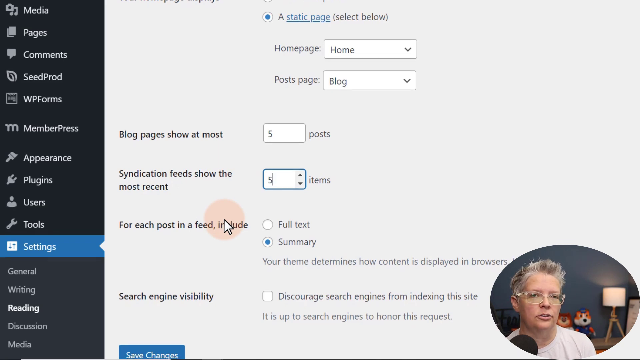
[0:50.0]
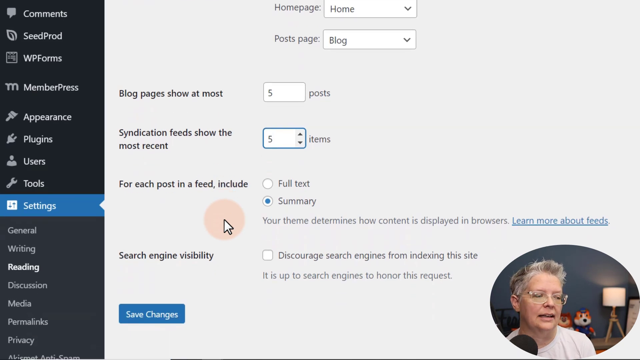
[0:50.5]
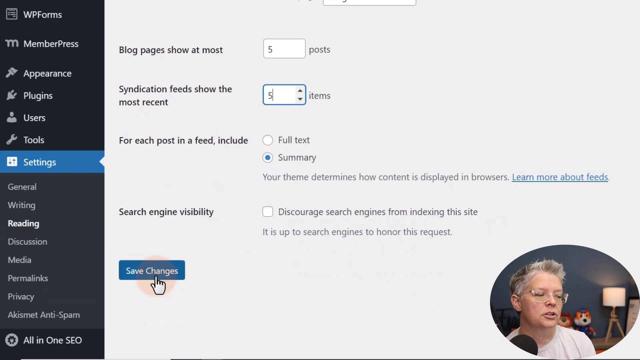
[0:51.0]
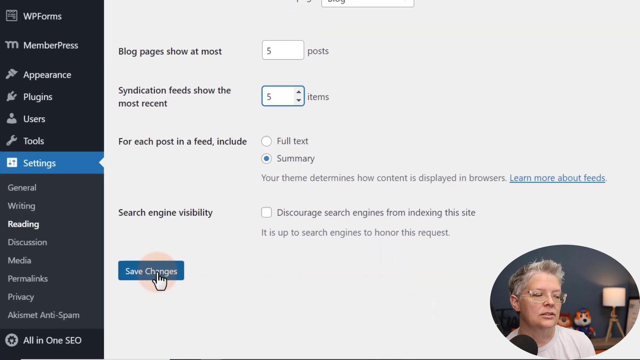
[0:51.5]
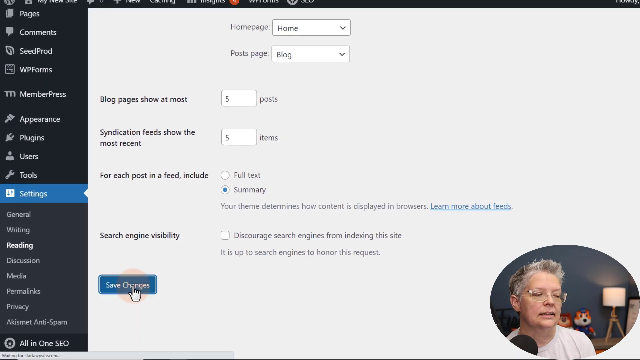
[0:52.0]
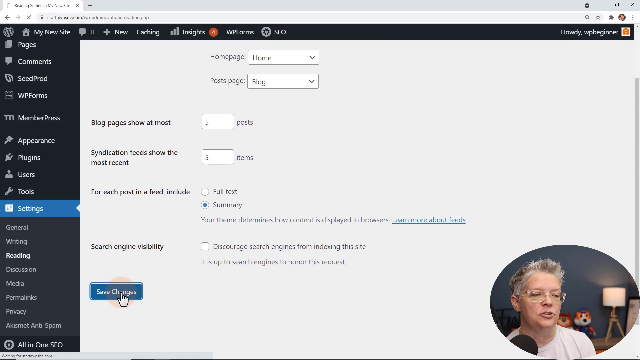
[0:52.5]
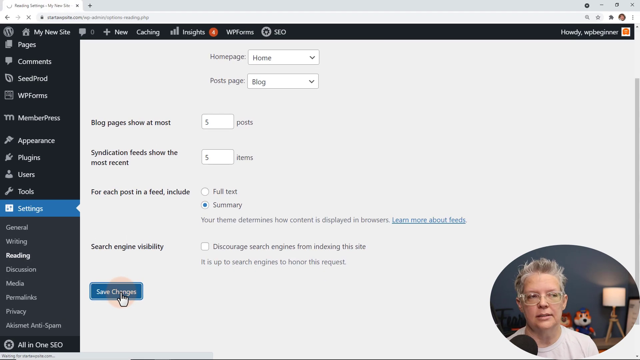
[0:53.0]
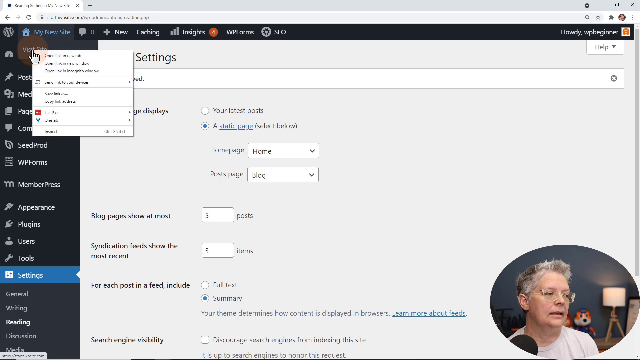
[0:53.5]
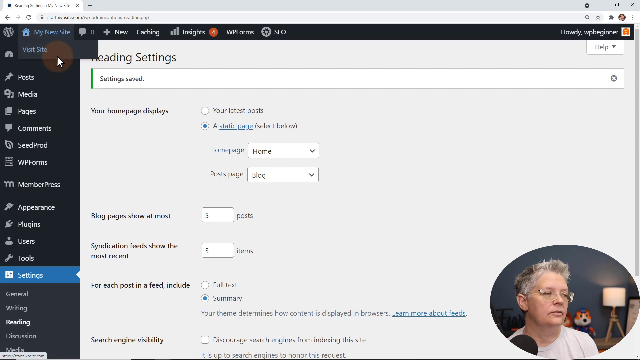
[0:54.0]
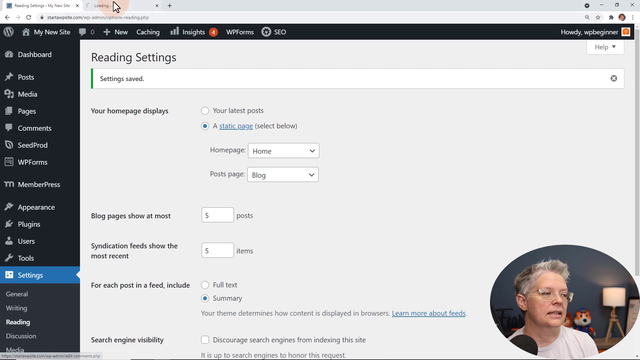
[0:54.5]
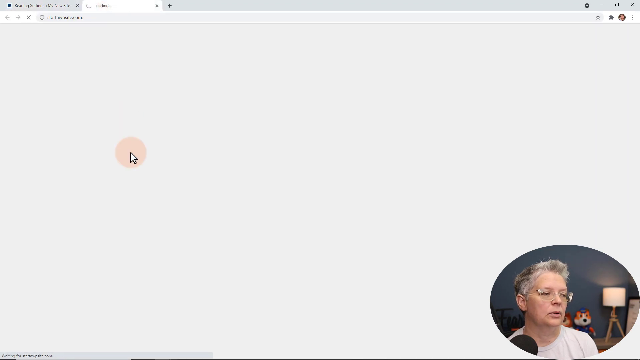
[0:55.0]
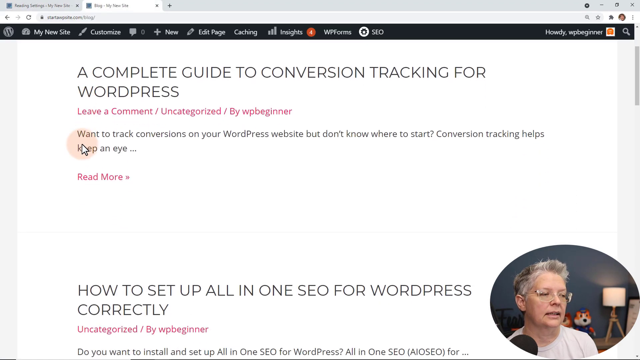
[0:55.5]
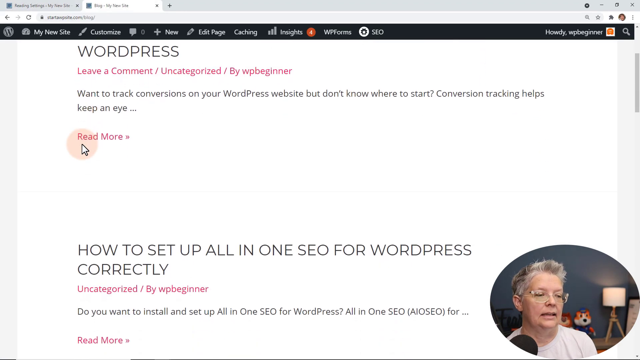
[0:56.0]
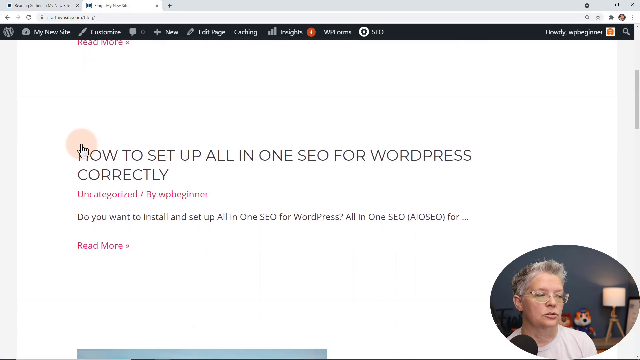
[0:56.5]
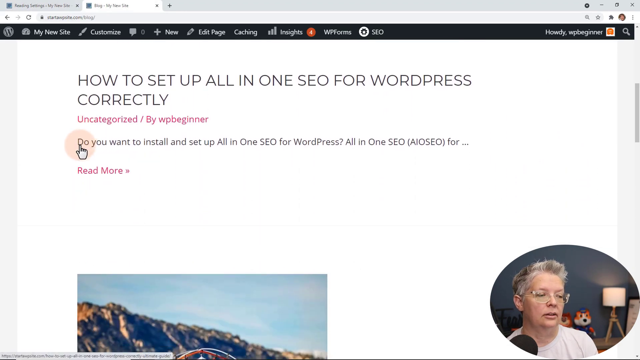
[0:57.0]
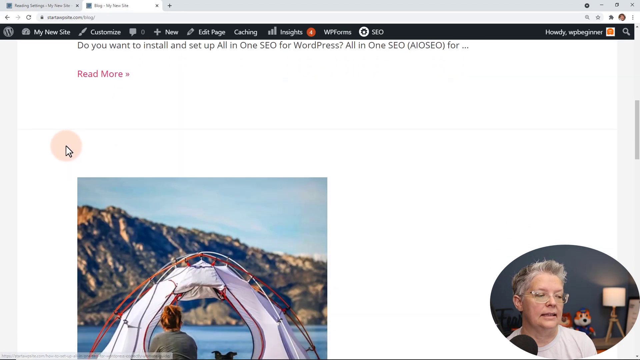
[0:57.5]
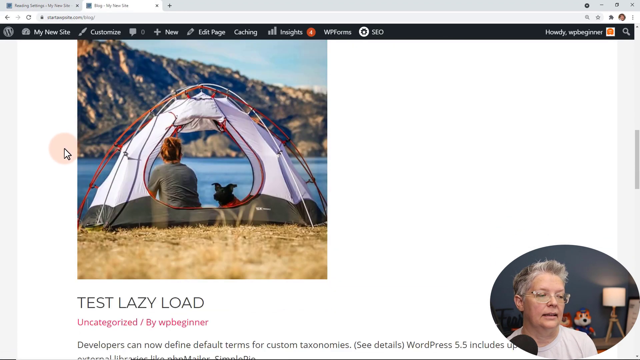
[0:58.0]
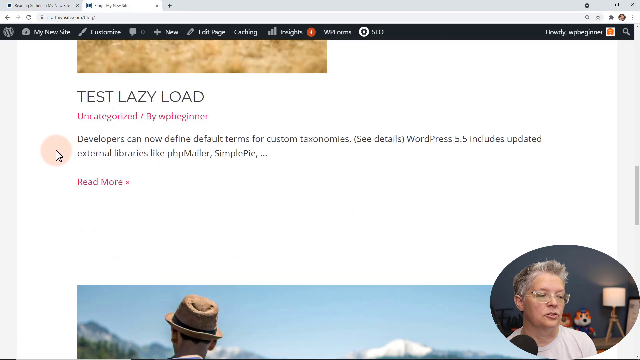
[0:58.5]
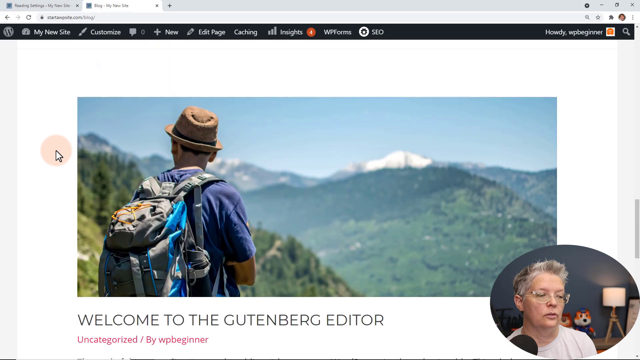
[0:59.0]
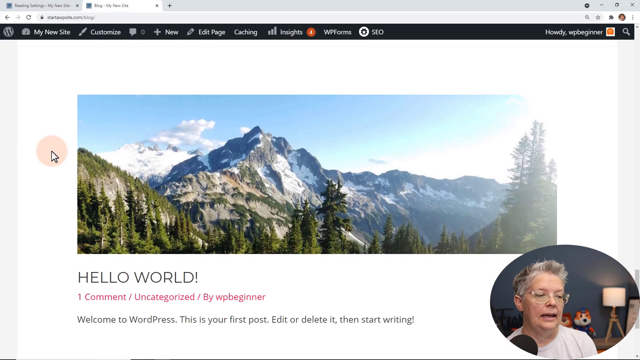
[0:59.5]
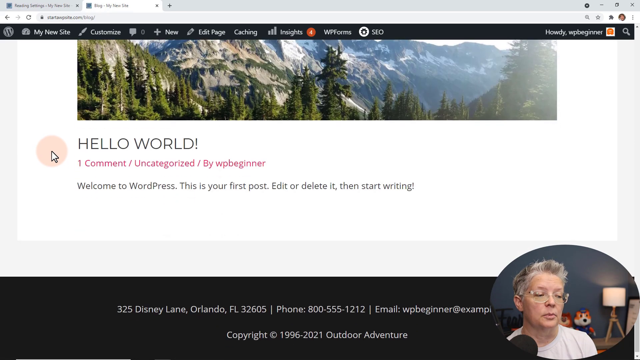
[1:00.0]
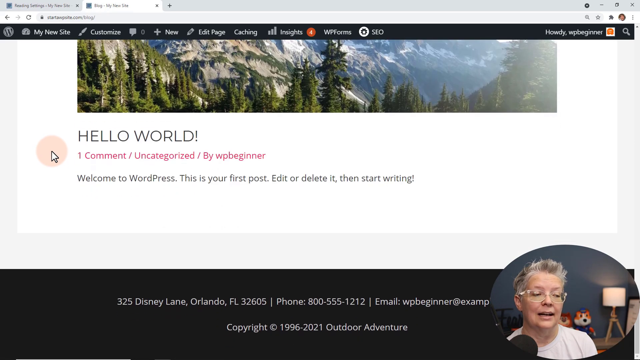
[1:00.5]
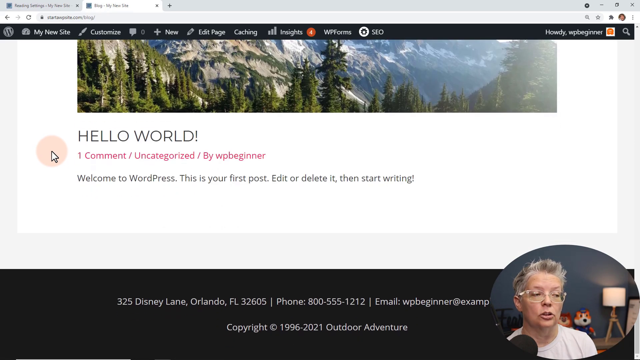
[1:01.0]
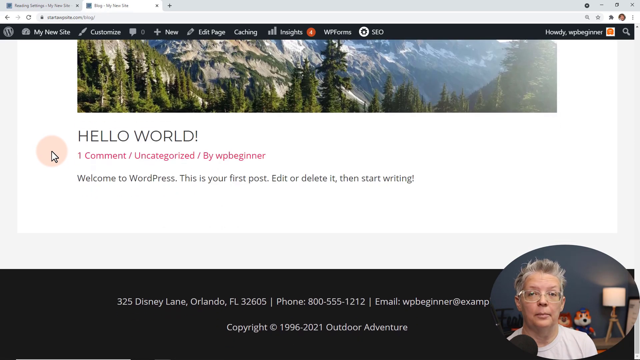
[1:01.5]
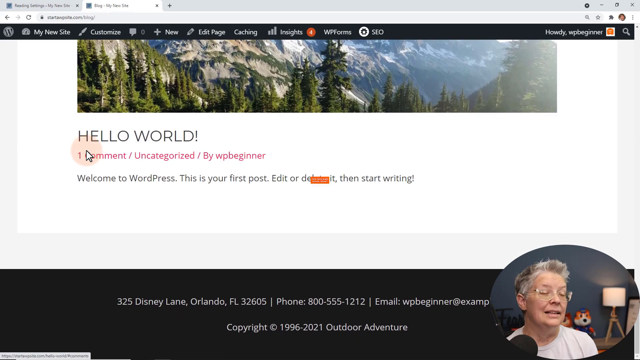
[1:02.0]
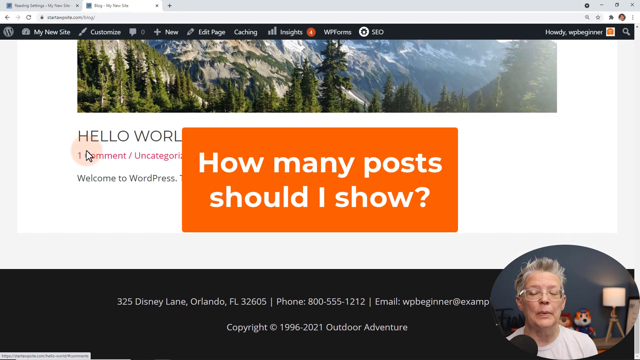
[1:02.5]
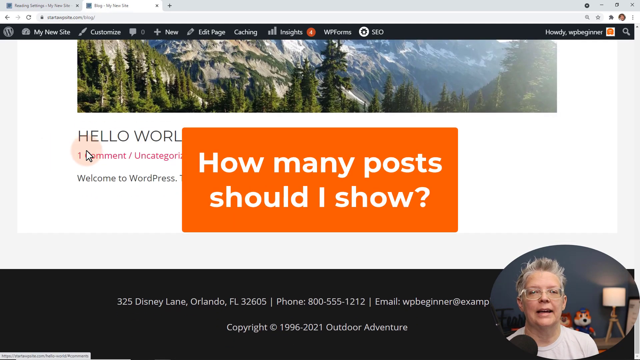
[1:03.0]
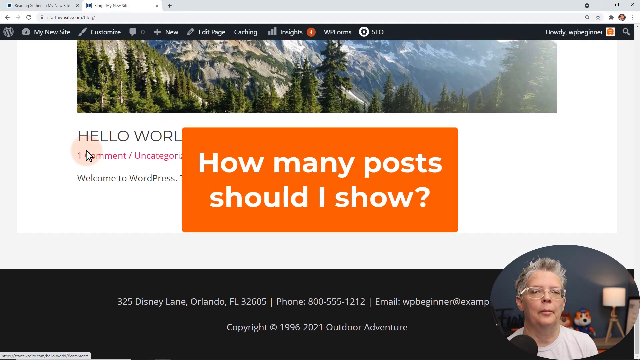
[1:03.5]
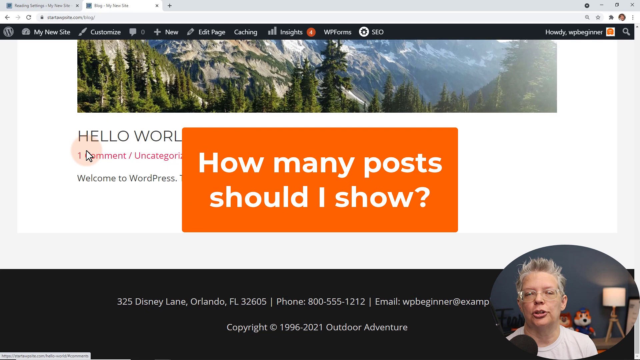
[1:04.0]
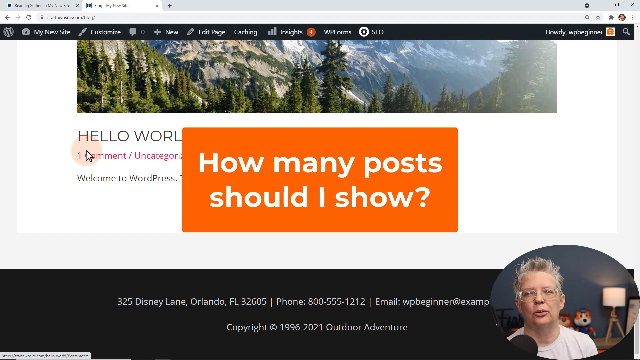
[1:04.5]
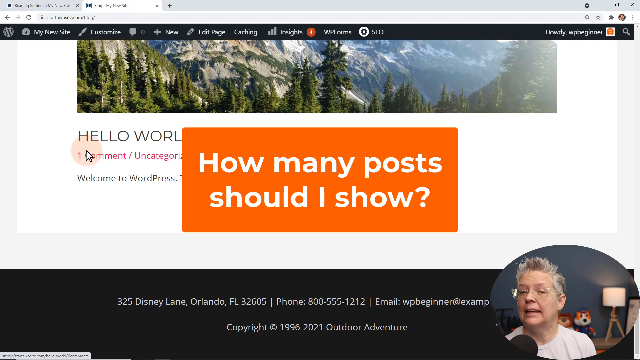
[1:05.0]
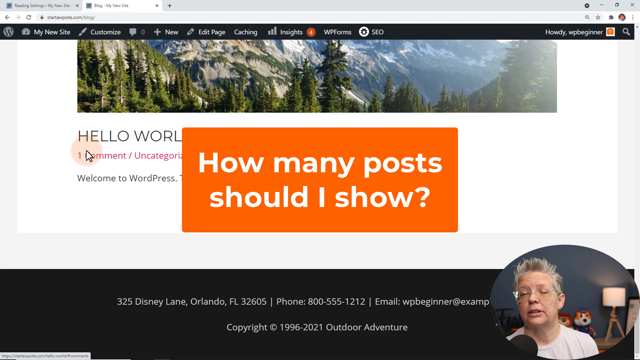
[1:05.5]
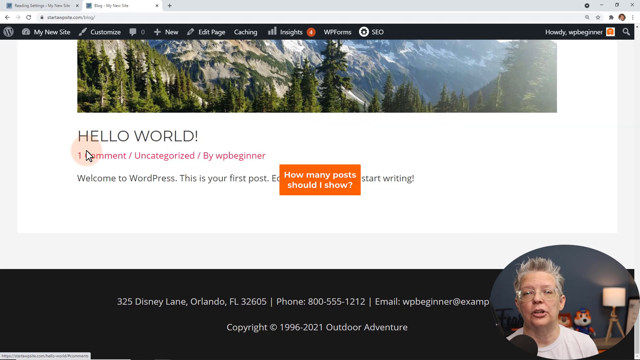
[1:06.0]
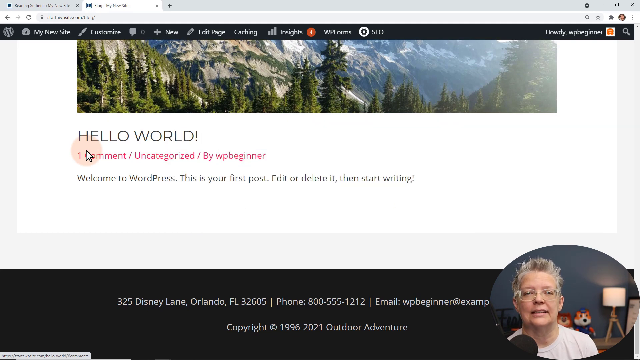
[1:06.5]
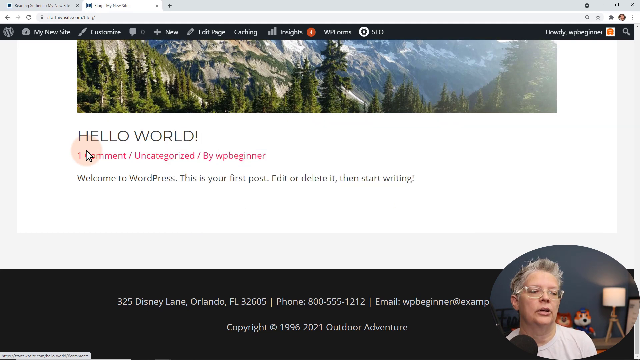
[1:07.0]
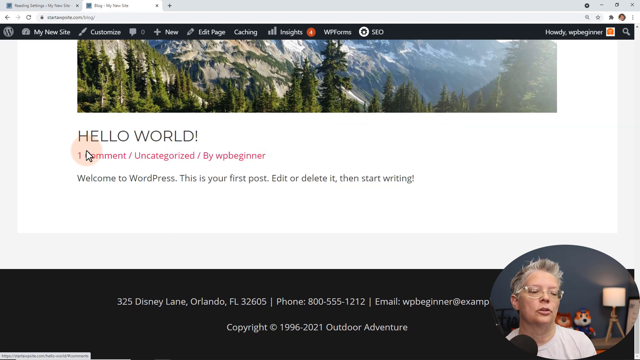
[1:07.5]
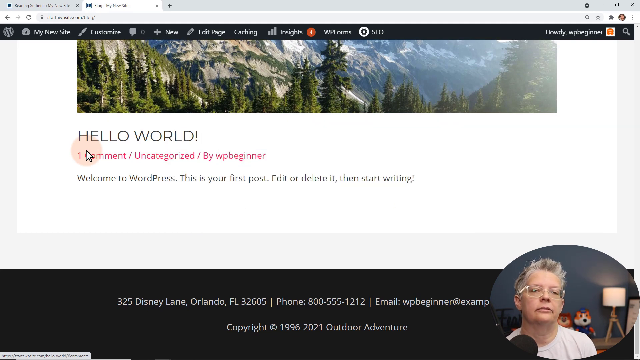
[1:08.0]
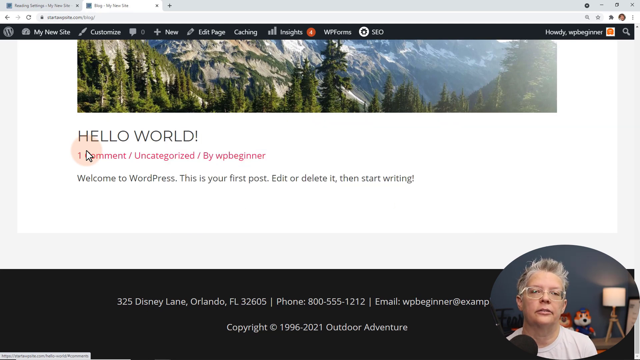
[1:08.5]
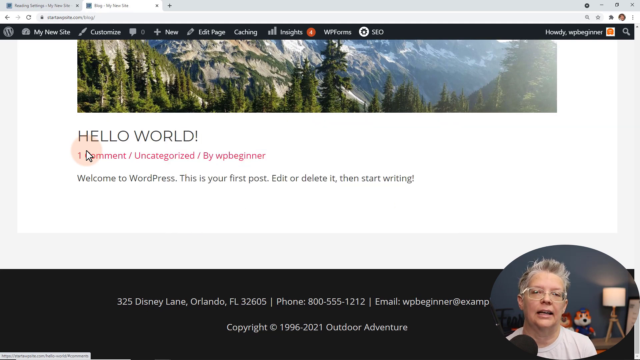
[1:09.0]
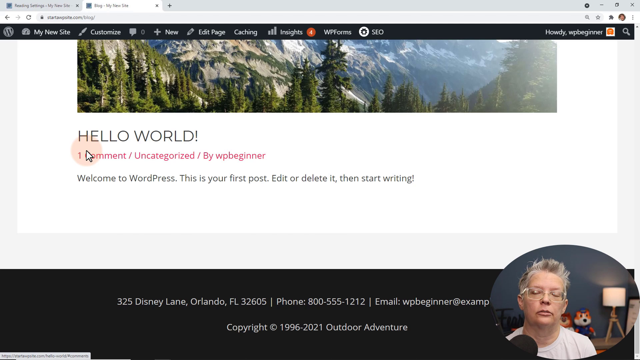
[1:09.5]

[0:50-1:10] The woman, who has gray hair, glasses and a white shirt, continues on the WordPress website. After changing the post feed, she clicks save changes in the settings and then opens a new page that seems to be a blog page, with a few different subjects including mountains and a tent, plus other information, including "hello world" in the comment section. White text on an orange background then appears on the screen, saying "how many posts should I show?" The view then changes to a different page showing a few different subjects in some kind of ambient setting.